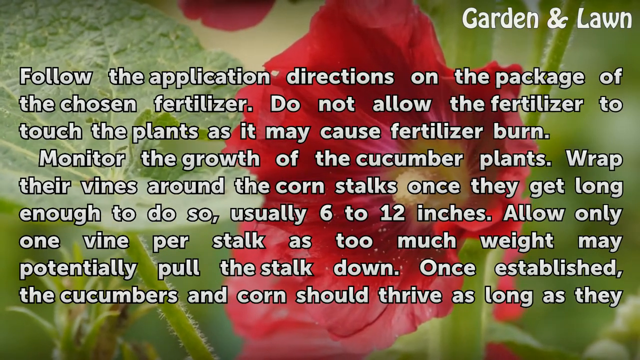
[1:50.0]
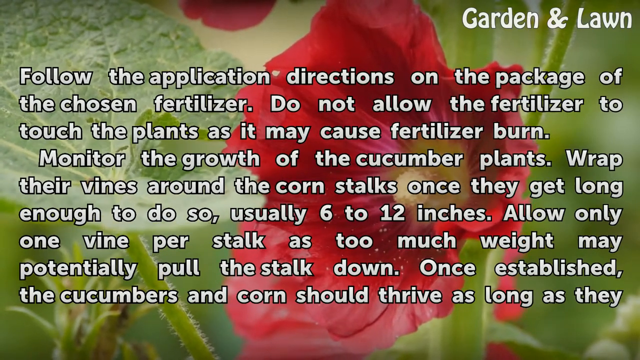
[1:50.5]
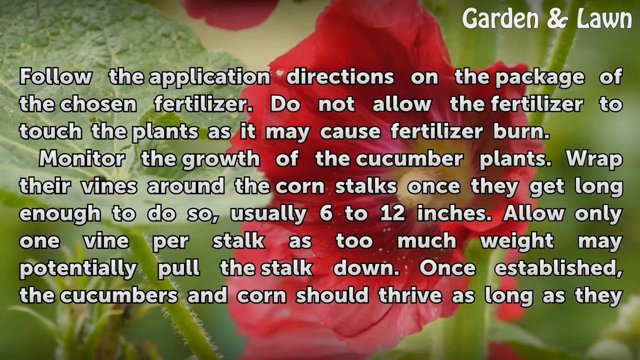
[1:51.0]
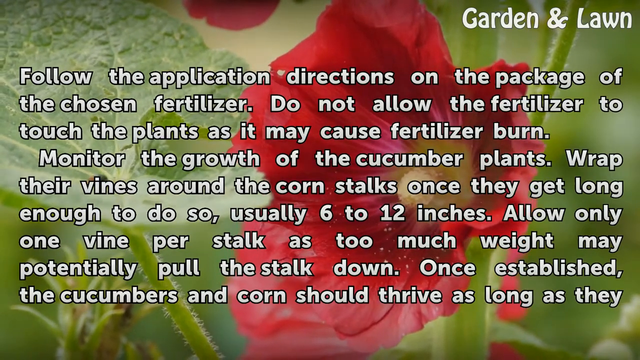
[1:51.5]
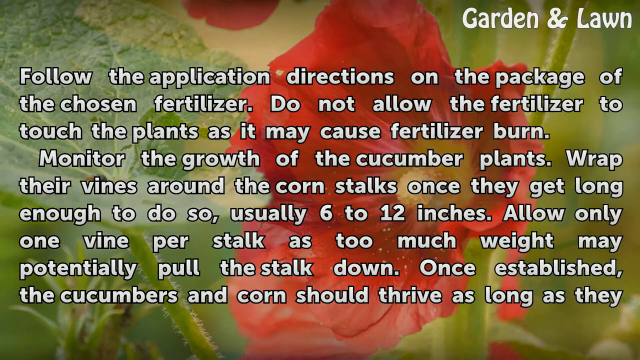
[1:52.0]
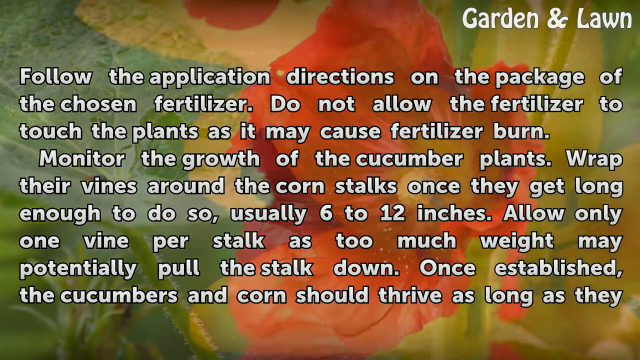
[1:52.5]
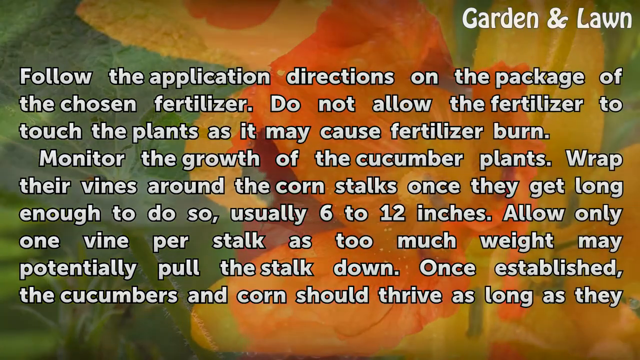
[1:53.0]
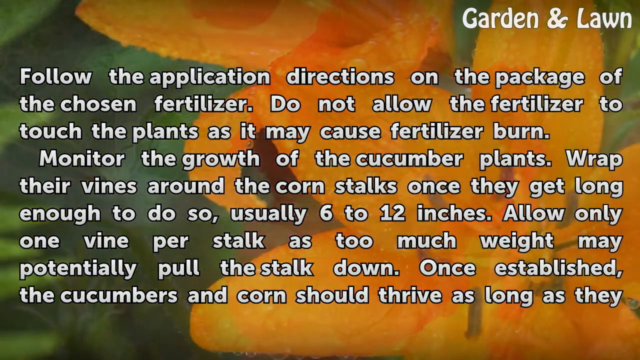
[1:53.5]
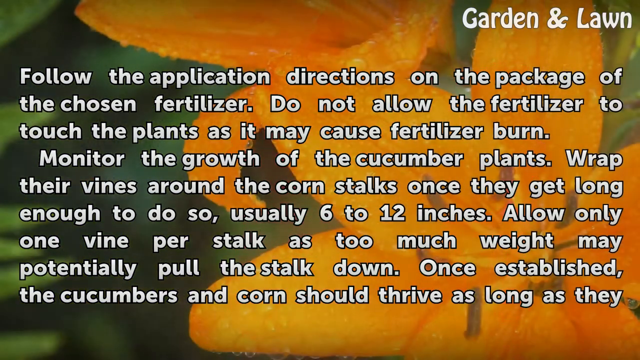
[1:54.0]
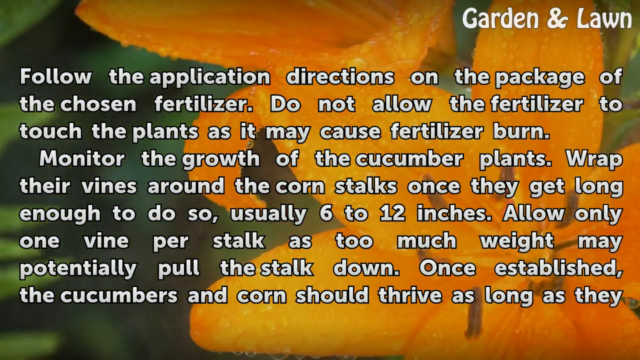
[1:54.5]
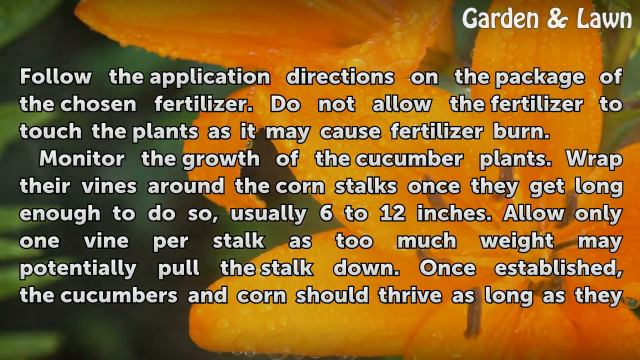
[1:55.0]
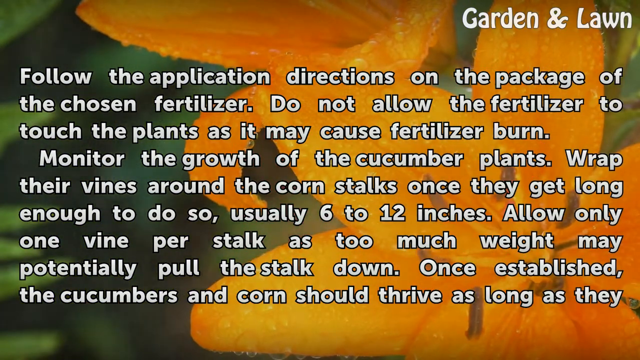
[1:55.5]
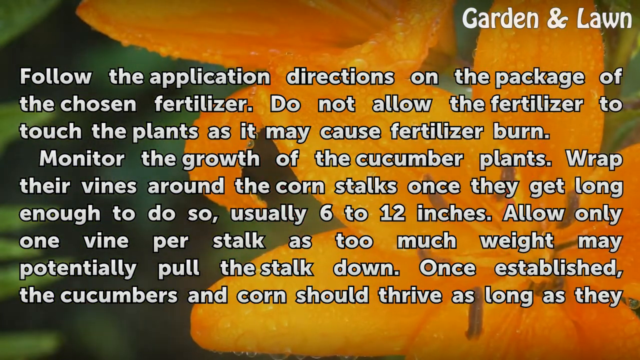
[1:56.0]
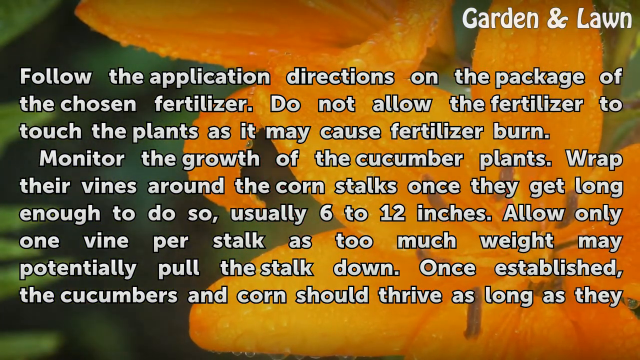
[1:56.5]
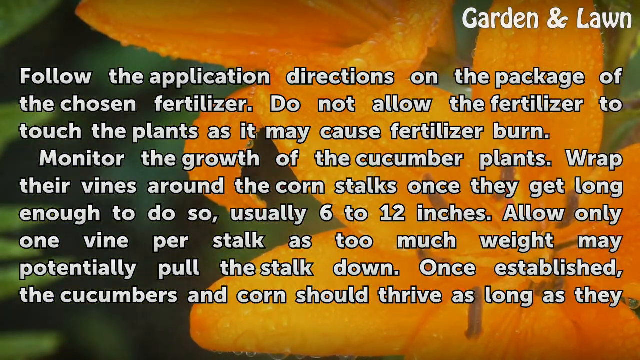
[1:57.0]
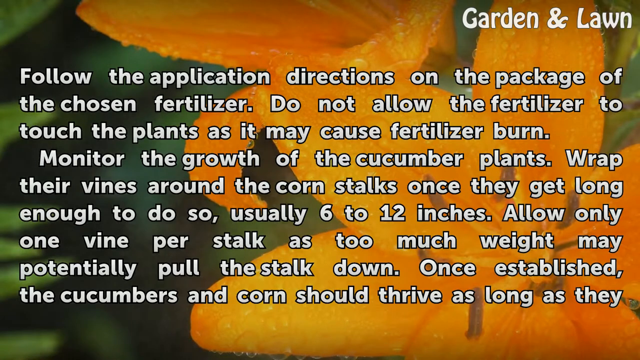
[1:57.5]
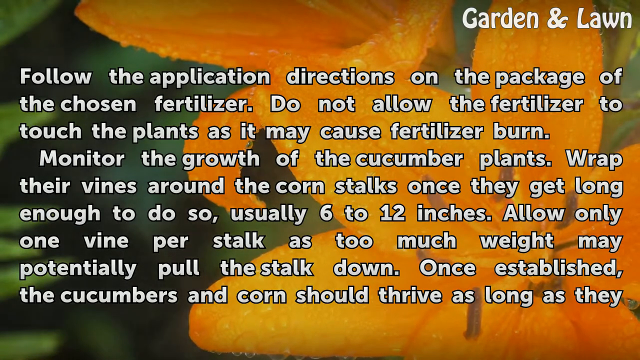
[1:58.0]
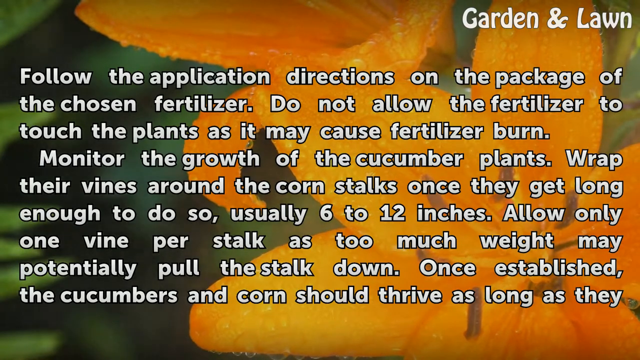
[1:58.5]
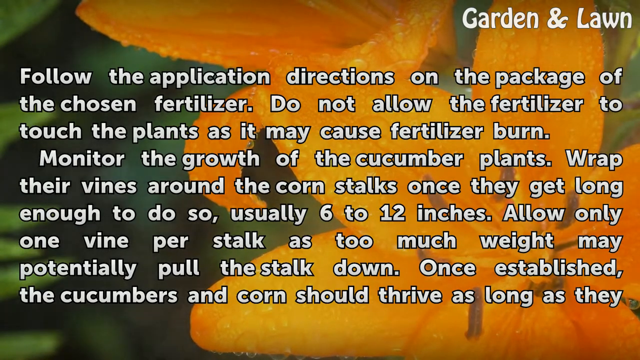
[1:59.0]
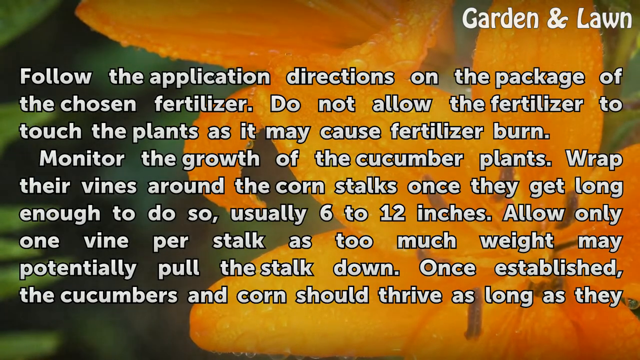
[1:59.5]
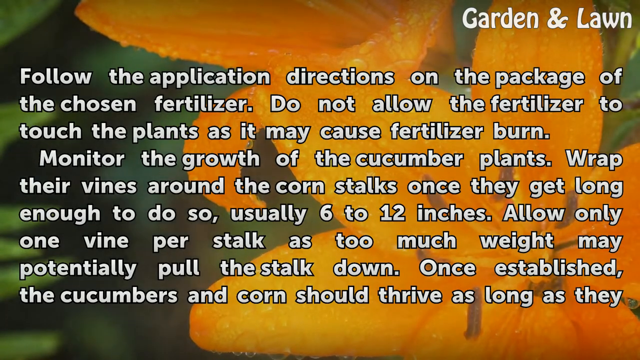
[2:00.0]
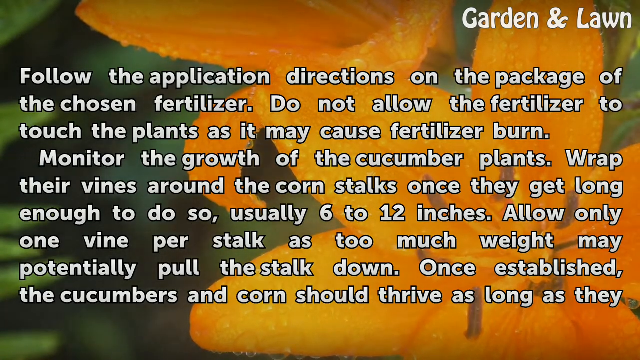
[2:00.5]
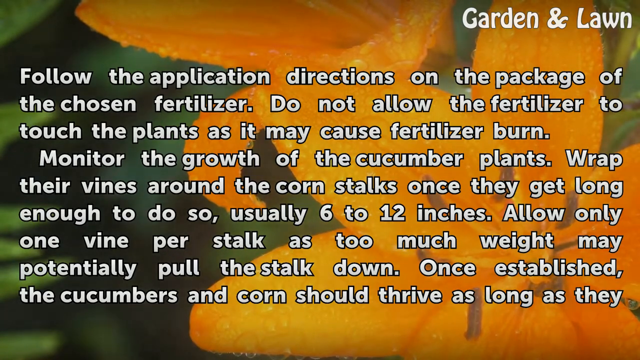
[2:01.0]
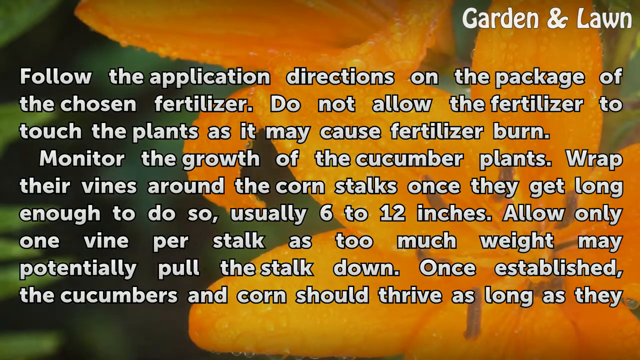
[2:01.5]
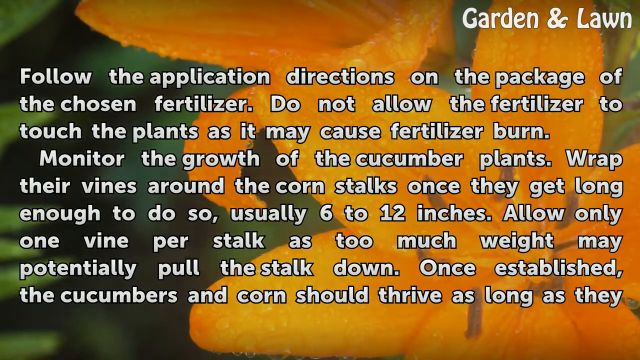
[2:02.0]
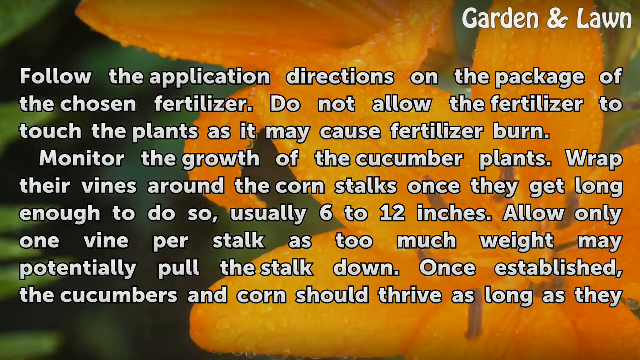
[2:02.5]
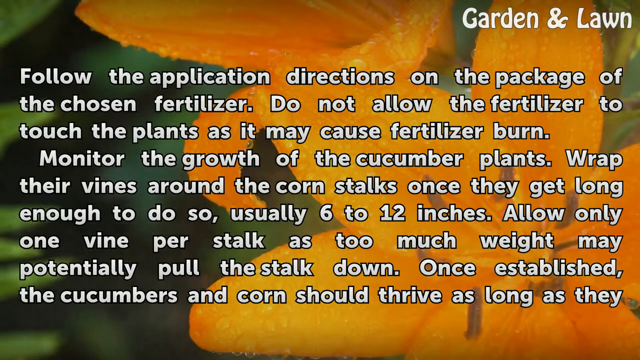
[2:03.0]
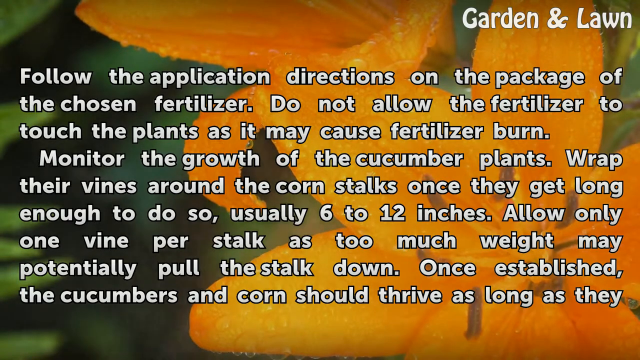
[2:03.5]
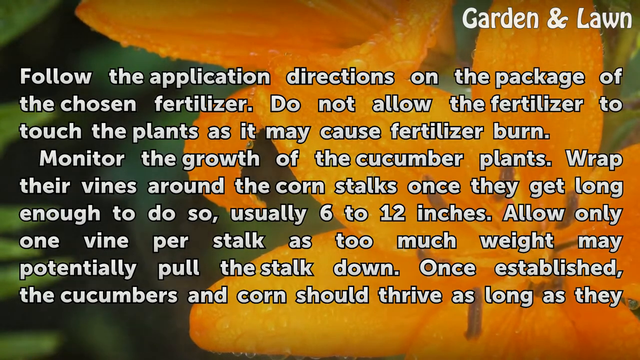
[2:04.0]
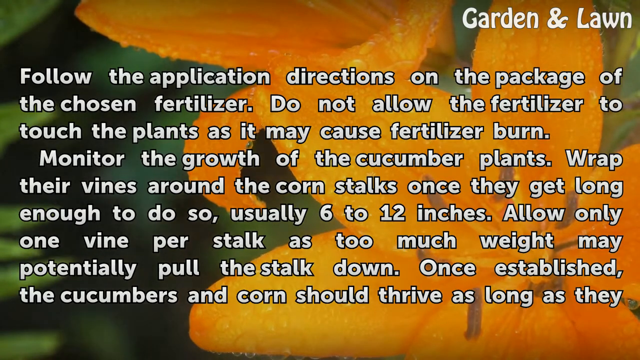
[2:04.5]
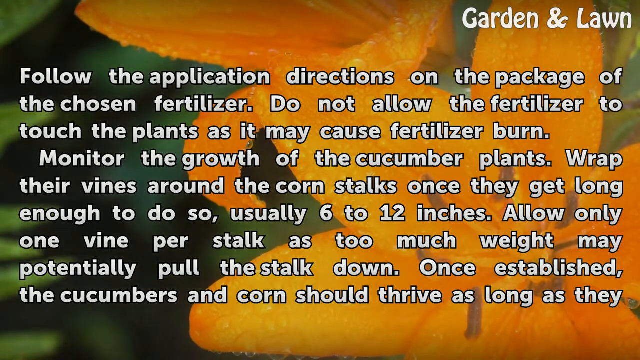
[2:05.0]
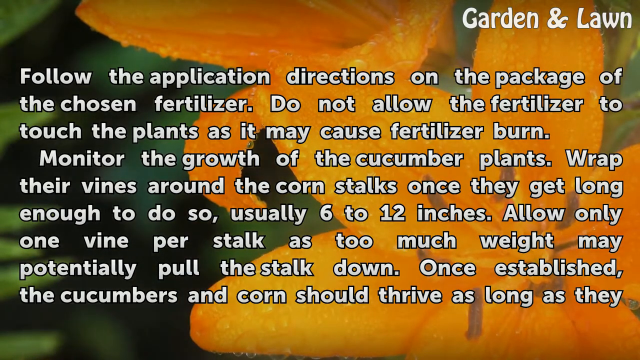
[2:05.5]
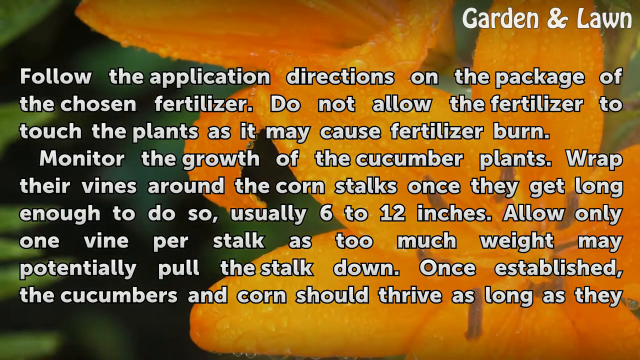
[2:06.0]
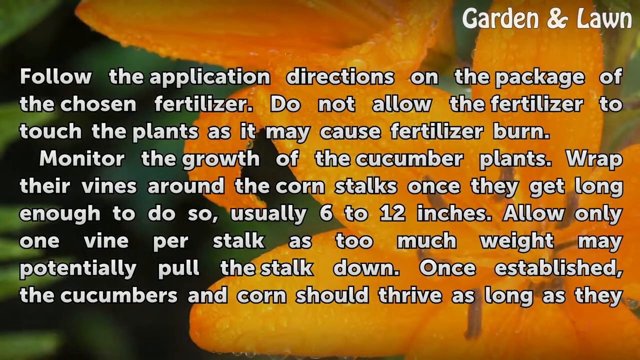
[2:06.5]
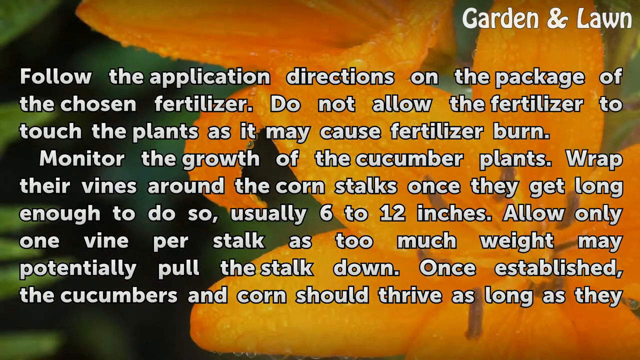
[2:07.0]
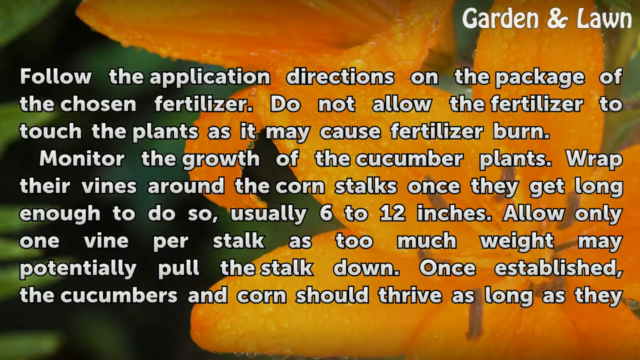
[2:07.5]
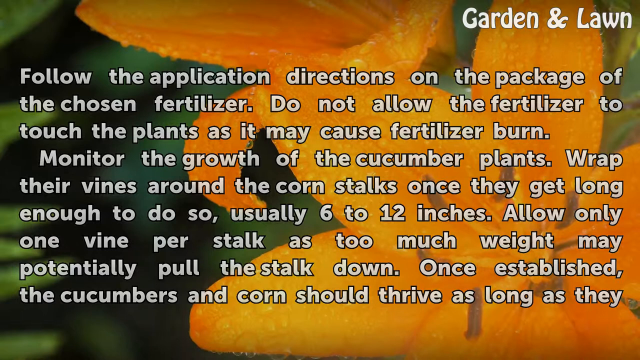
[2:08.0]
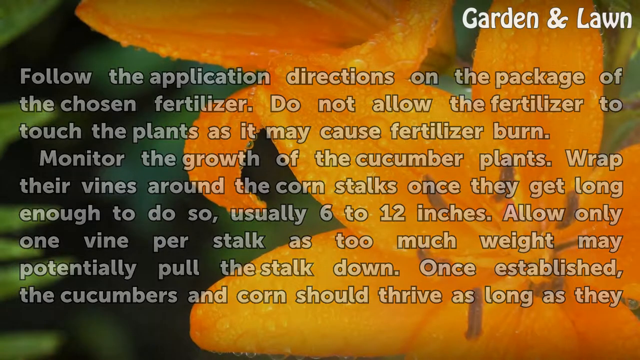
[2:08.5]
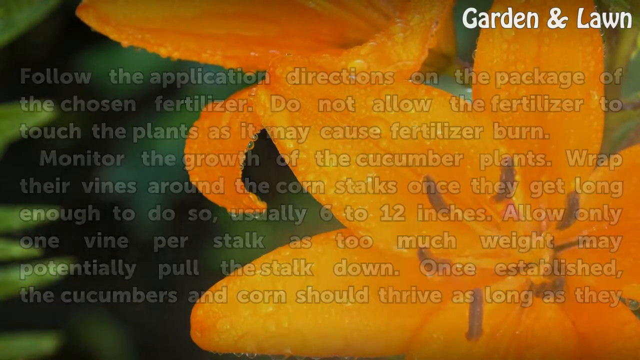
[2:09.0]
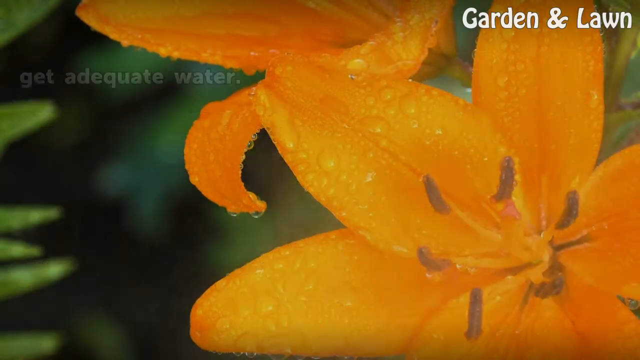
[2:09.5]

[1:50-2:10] Footage of a hollyhock plant shaking in the wind shows the text "garden and lawn" in the top right-hand corner, along with the text "follow the application directions on the package of the chosen fertilizer. Do not allow the fertilizer to touch the plants as it may cause fertilizer burn. Monitor the growth of the cucumber plants. Wrap their vines around the corn stalks once they get long enough to do so, usually around 6 to 12 inches. Allow only one vine per stalk as too much weight may potentially pull the stalk down. Once established the cucumbers and corn should thrive as long as they"; the rest is cut off. The background footage fades into an orange lily. This text then also fades out and is replaced by the text "Get adequate water." Some sort of blurred motion is visible in the background, possibly running water or rain. The font, style and color stay the same, with no changes to the formatting, and the "garden and lawn" logo is constant.